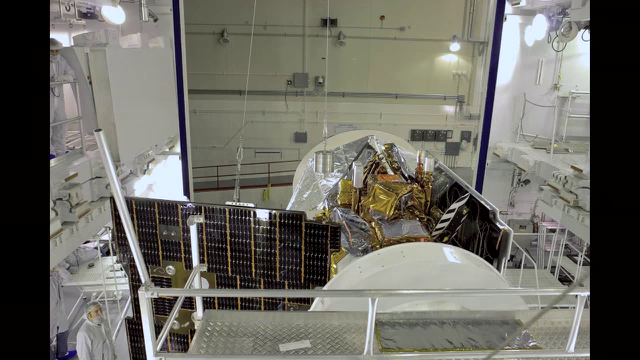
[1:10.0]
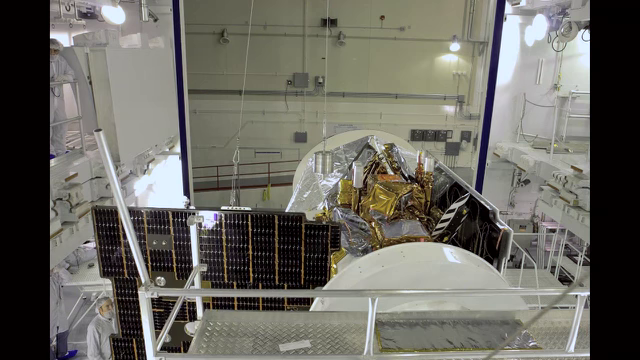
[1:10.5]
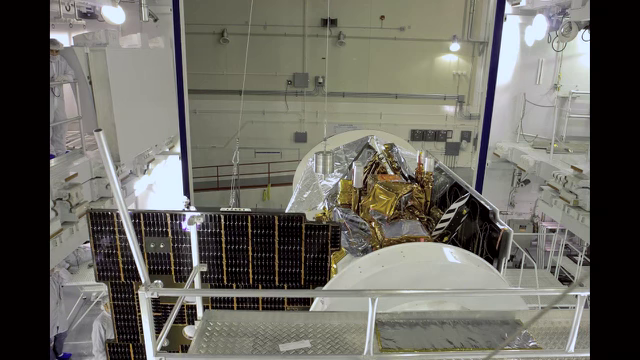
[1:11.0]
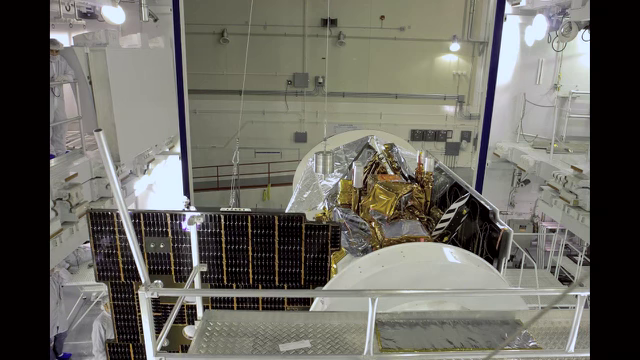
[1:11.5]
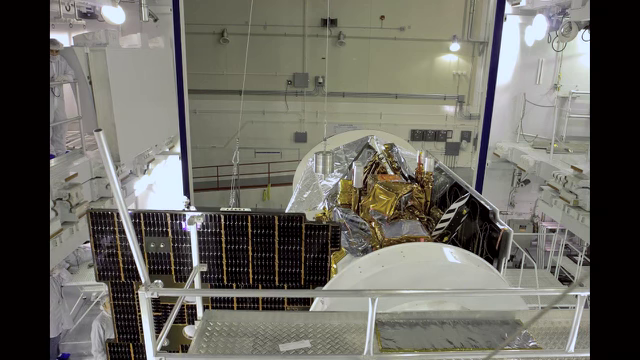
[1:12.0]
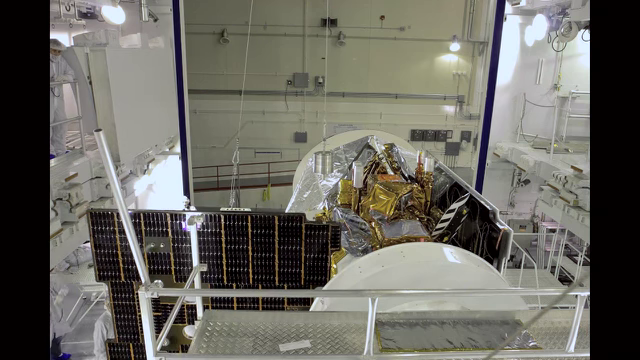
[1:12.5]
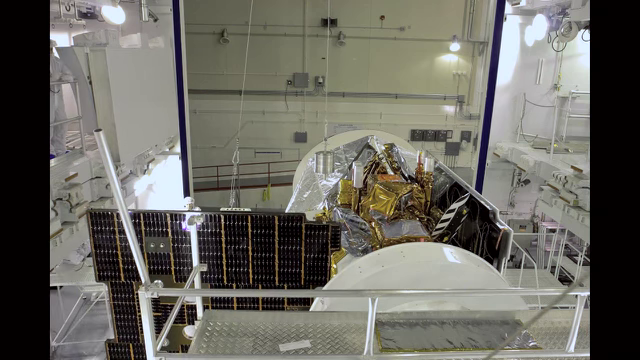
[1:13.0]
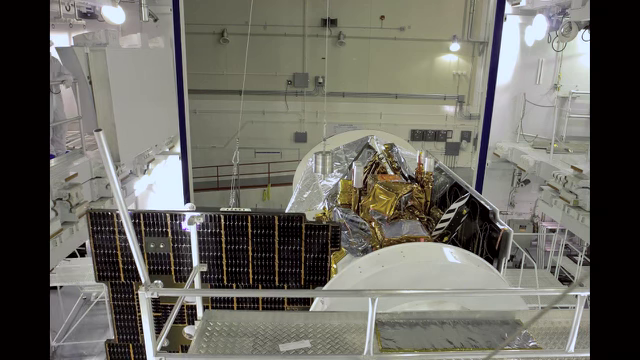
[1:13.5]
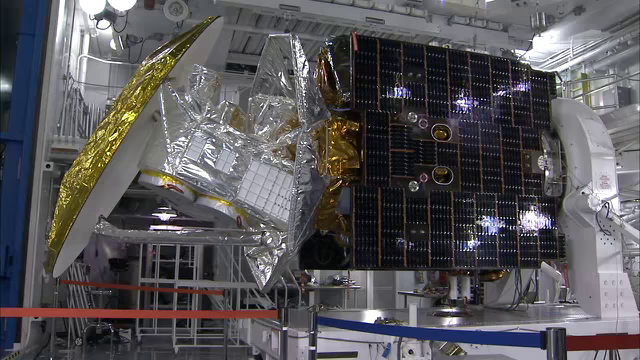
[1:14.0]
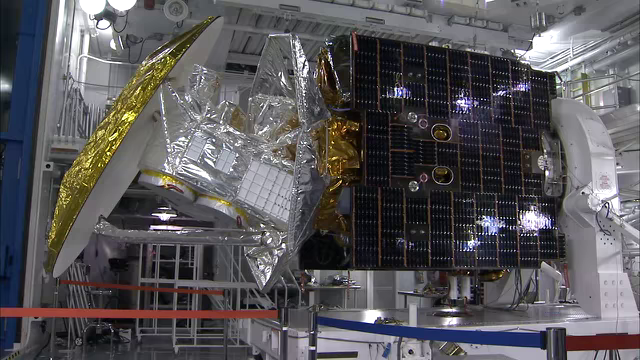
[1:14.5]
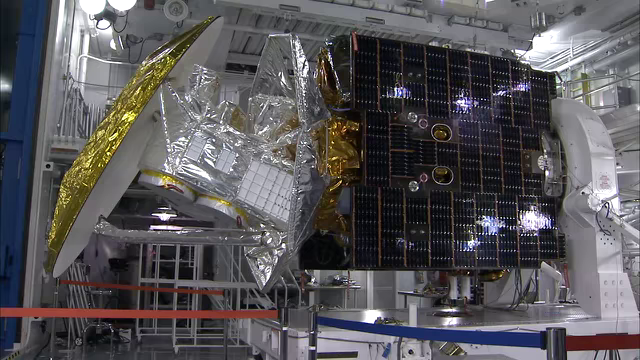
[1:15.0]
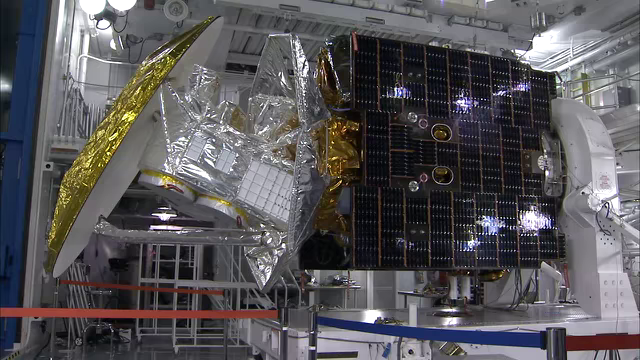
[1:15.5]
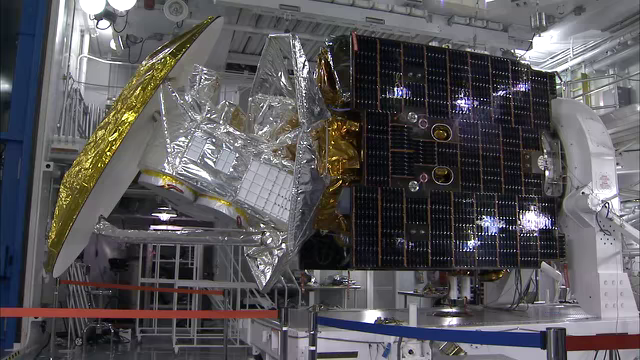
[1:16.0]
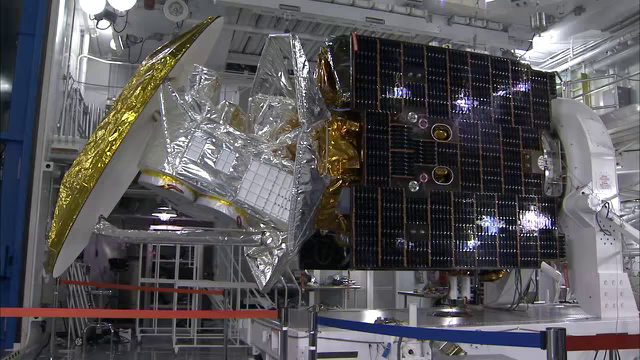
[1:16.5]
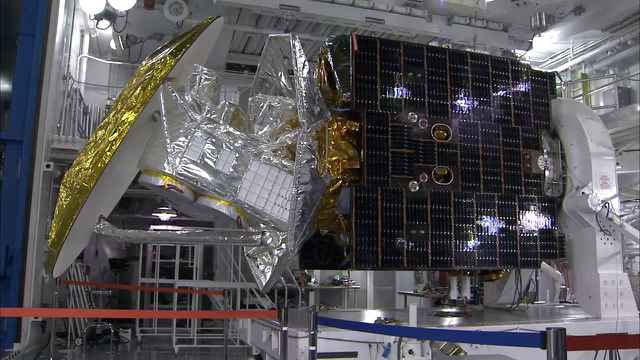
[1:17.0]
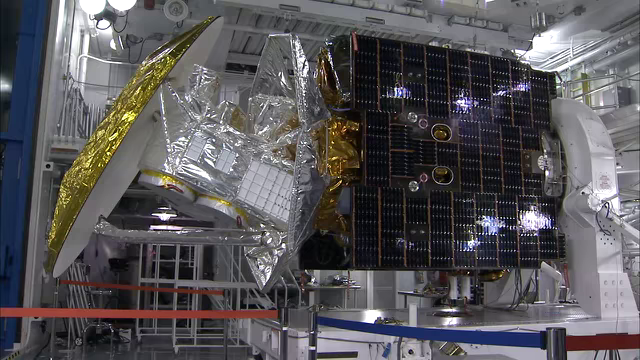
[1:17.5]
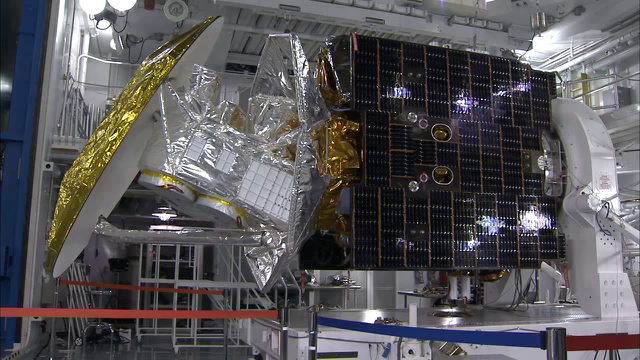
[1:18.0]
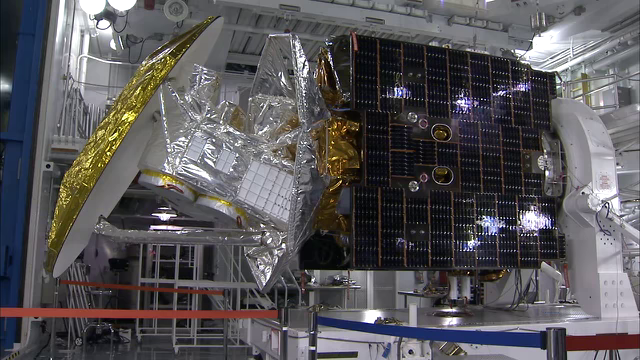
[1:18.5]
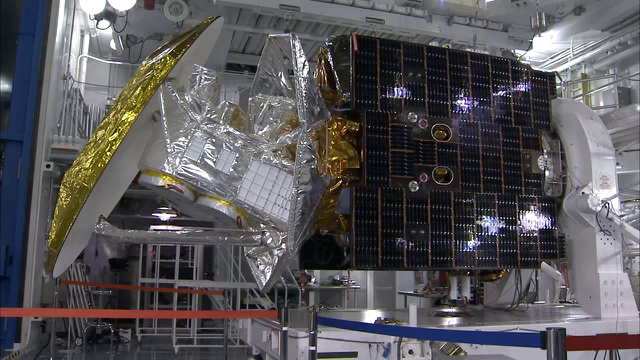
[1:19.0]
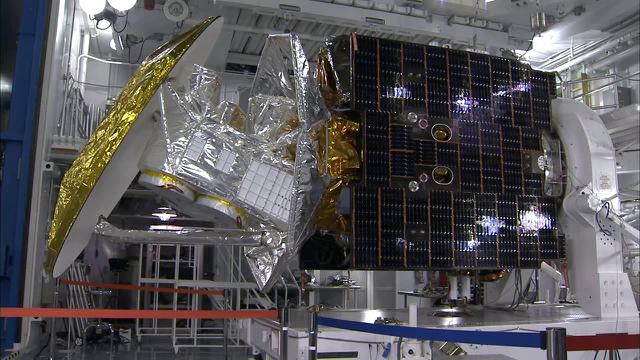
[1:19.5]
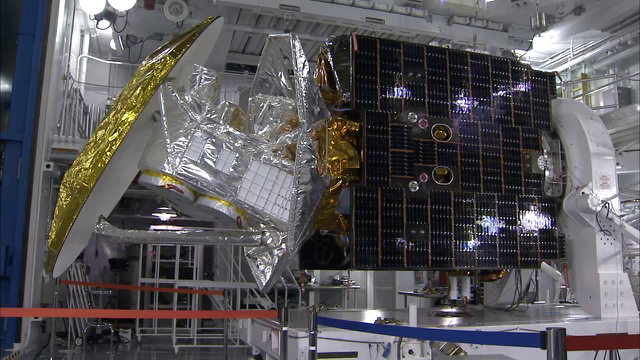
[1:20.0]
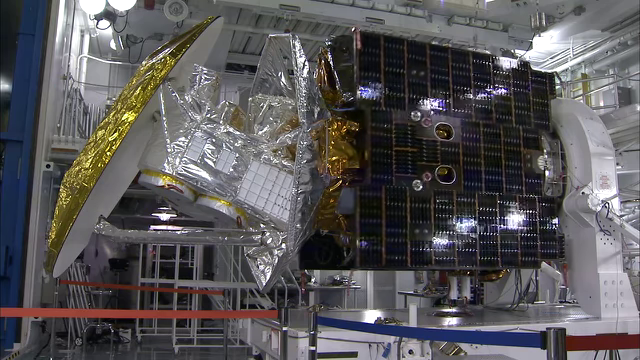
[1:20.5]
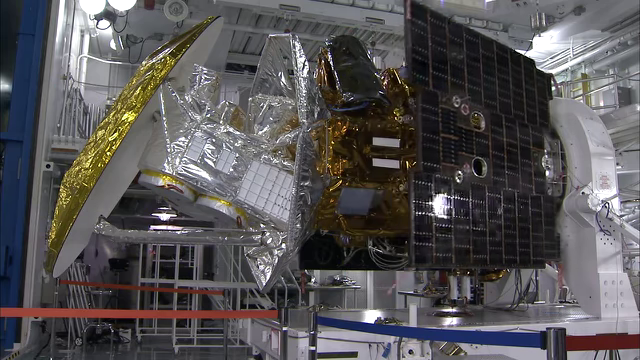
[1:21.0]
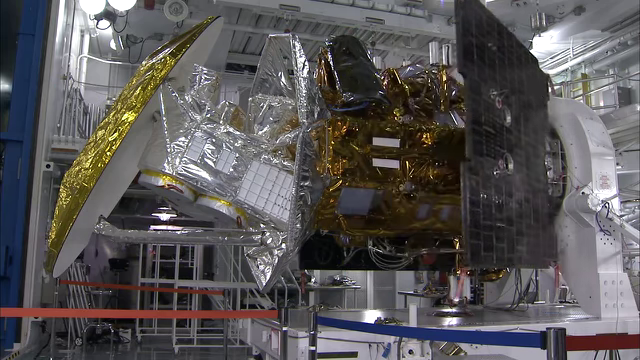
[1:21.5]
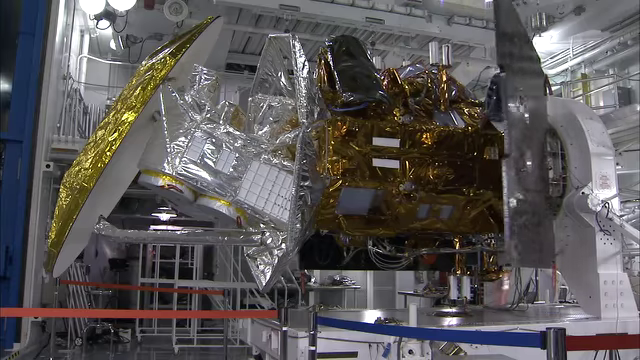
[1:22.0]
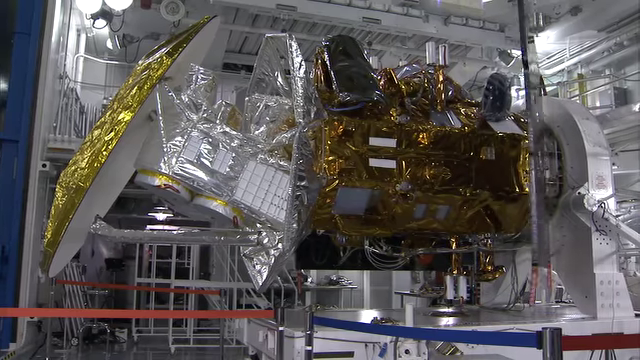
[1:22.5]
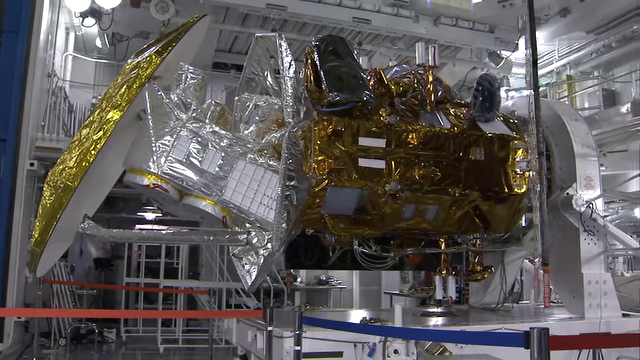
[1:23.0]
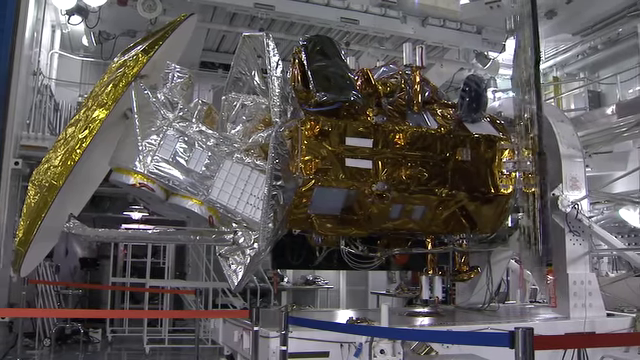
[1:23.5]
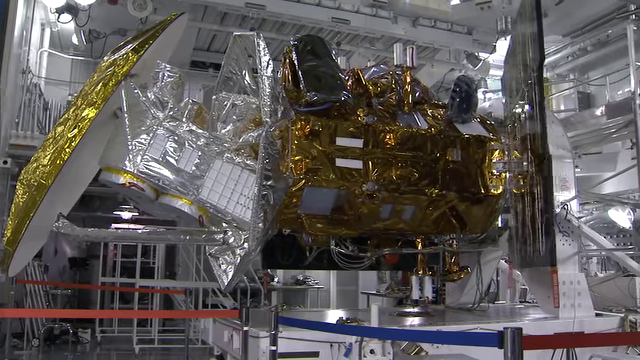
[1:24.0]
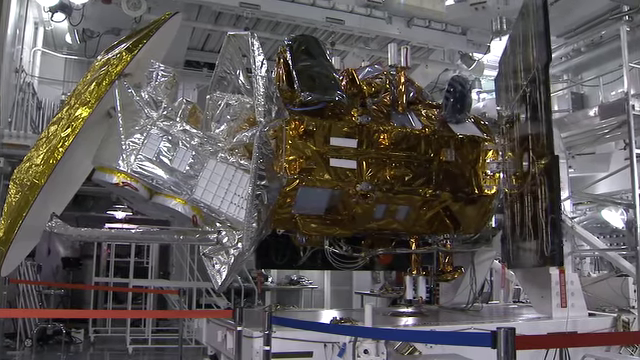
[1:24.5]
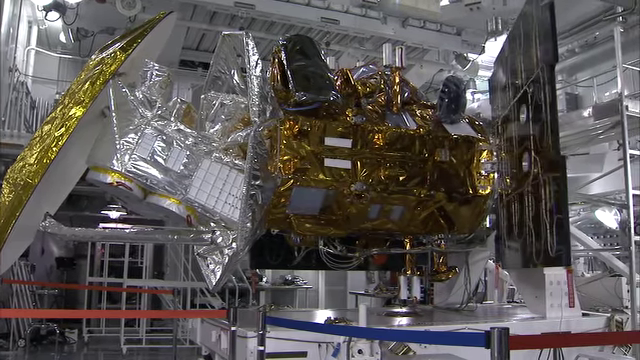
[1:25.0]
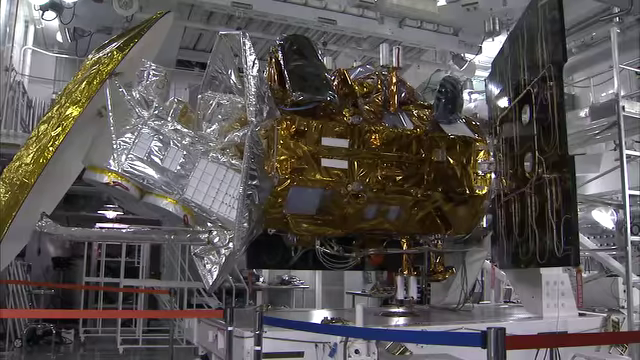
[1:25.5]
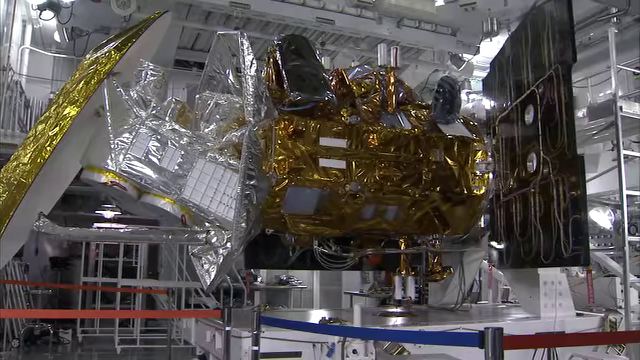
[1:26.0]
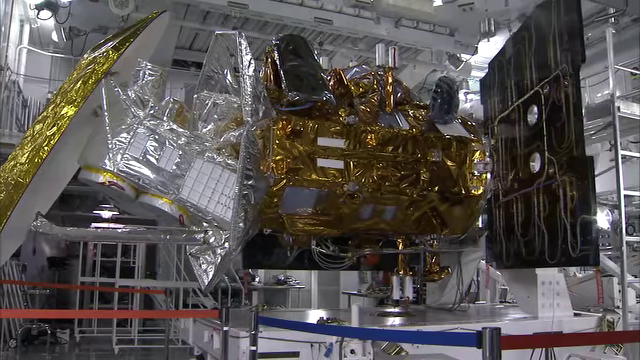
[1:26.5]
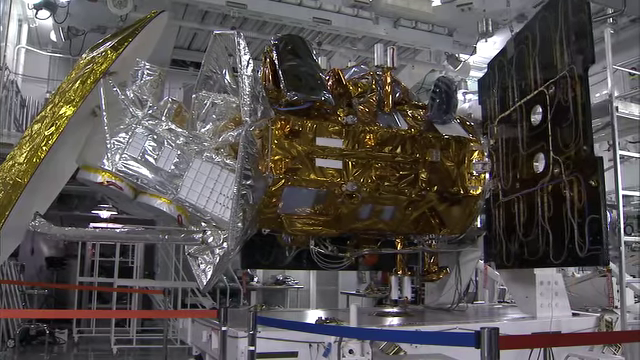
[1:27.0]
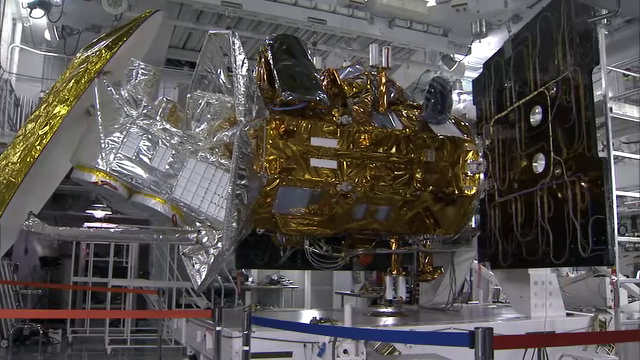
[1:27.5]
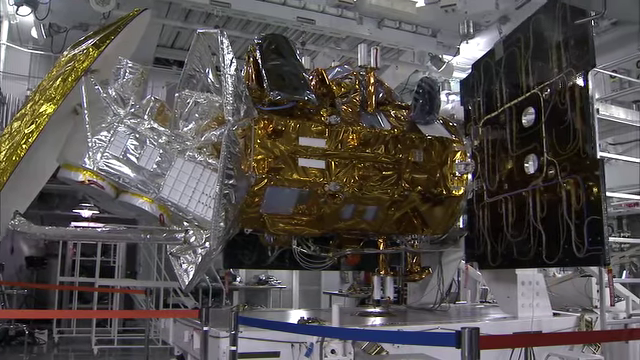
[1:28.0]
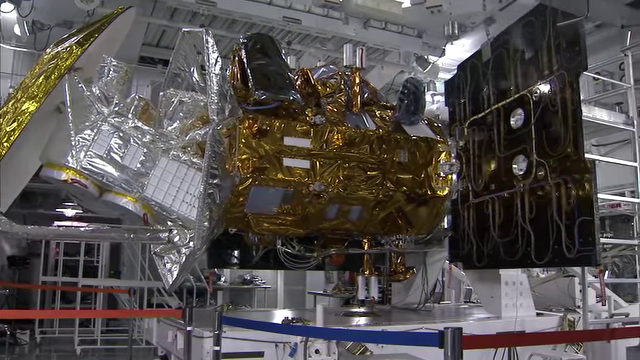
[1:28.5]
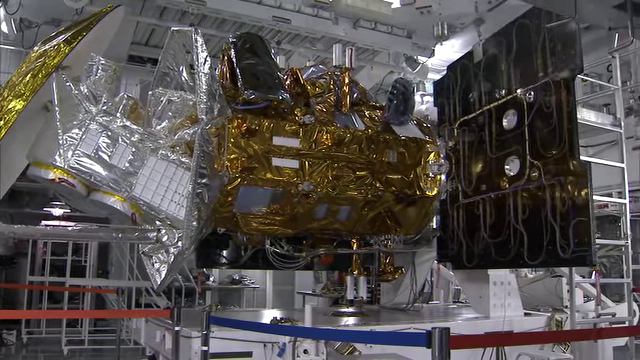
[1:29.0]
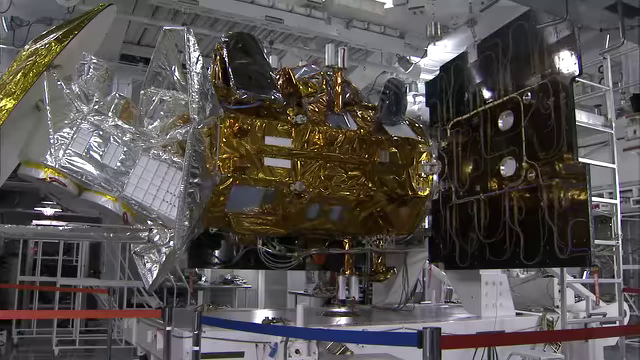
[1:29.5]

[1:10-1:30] The solar panels apparently are being put up, and the counterweight still hangs on a rope. The footage is very choppy, almost like pictures rather than video. One side of the panels is hooked to Aquarius. The panels, which may or may not be solar panels, are very black with dots of white, arranged in about nine columns and maybe three rows. Aquarius still looks like it has gold tinfoil, with something like plastic wrap around some of its parts. The panels then slide away outward, revealing the rest of Aquarius.